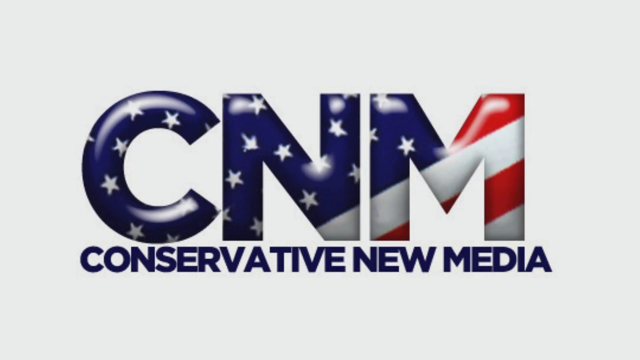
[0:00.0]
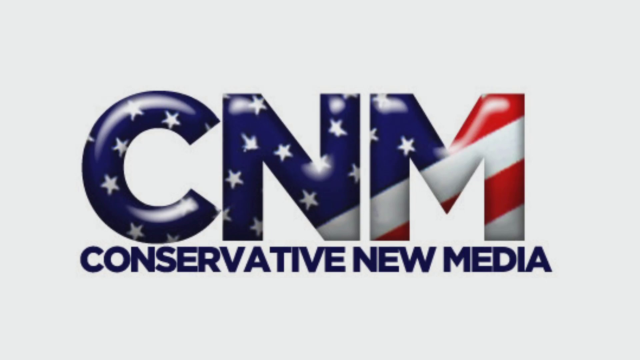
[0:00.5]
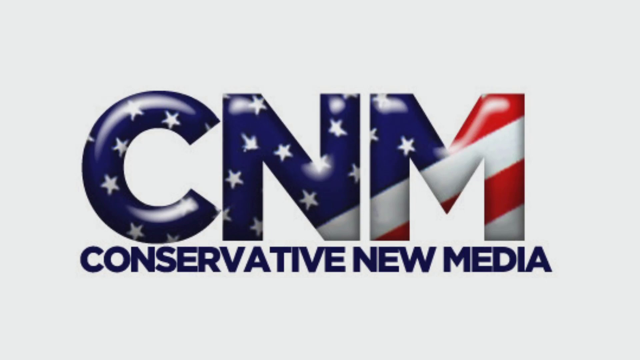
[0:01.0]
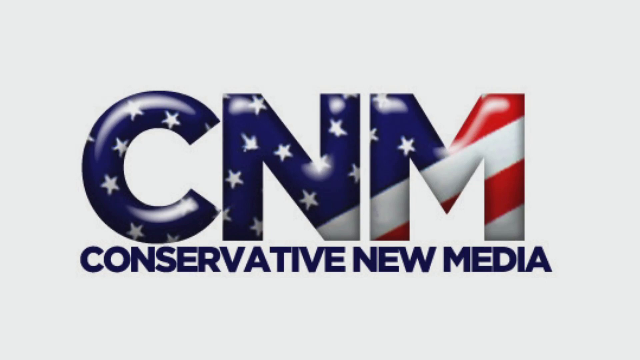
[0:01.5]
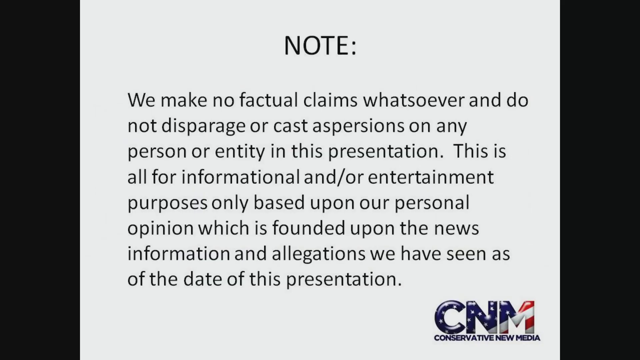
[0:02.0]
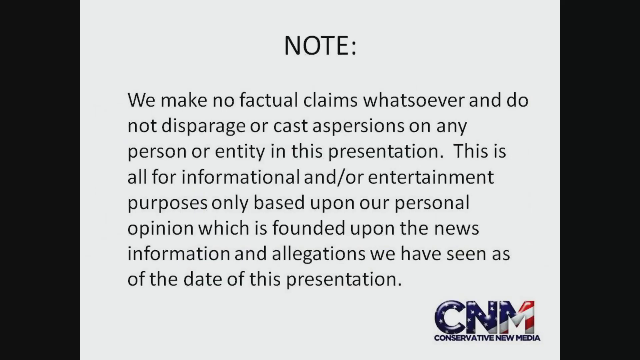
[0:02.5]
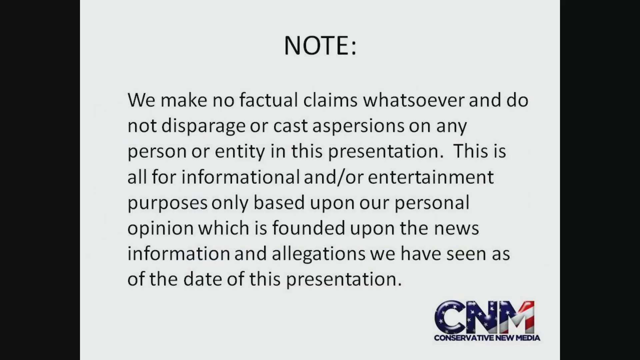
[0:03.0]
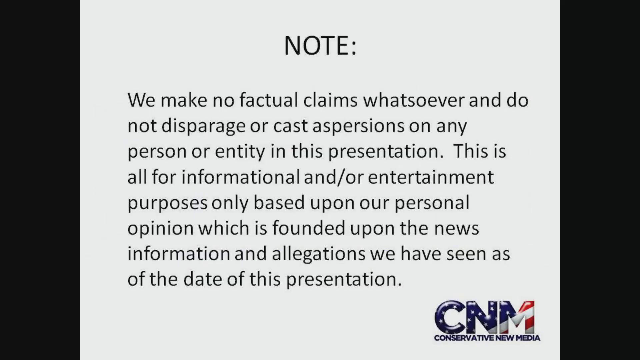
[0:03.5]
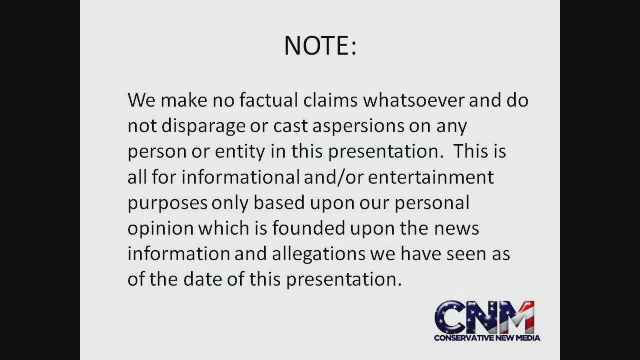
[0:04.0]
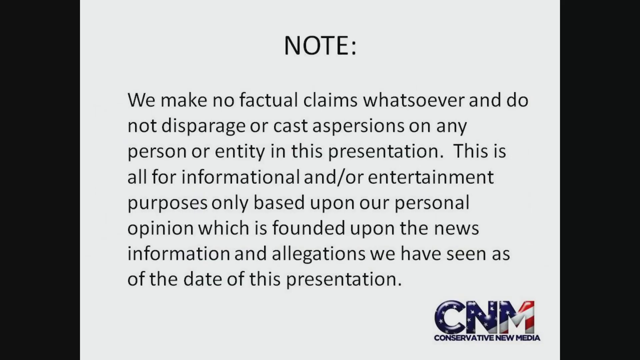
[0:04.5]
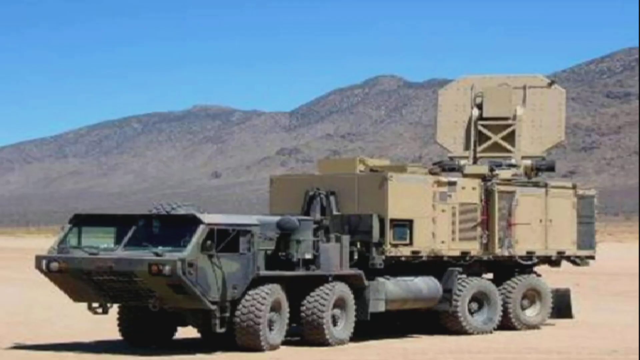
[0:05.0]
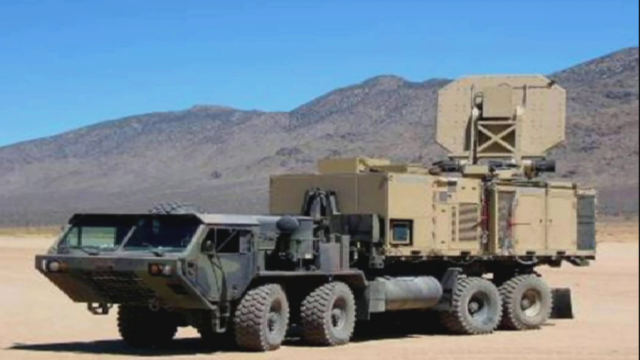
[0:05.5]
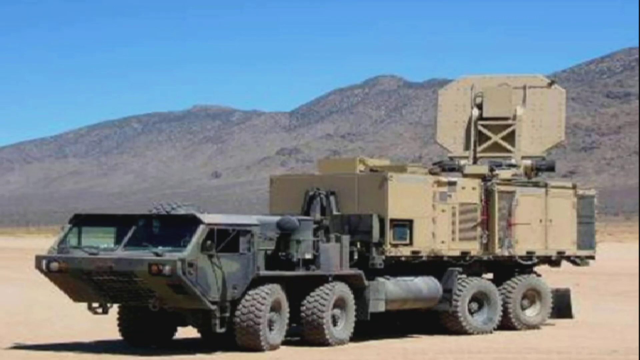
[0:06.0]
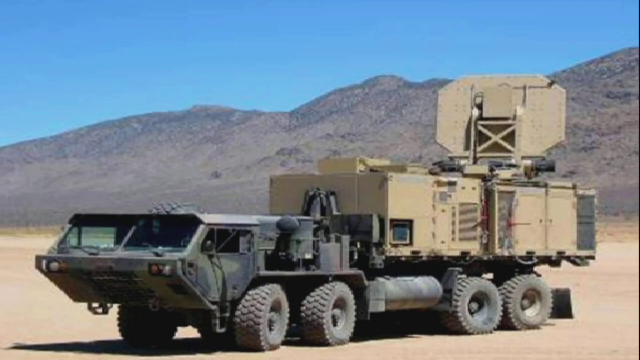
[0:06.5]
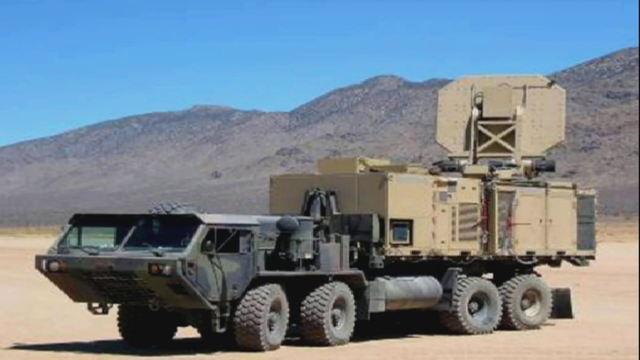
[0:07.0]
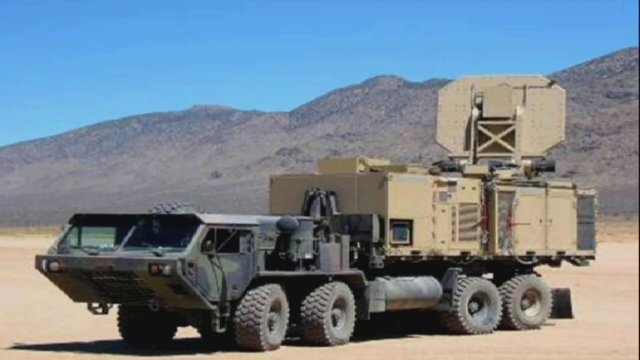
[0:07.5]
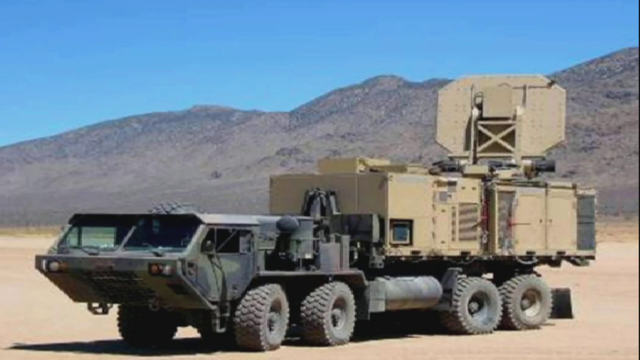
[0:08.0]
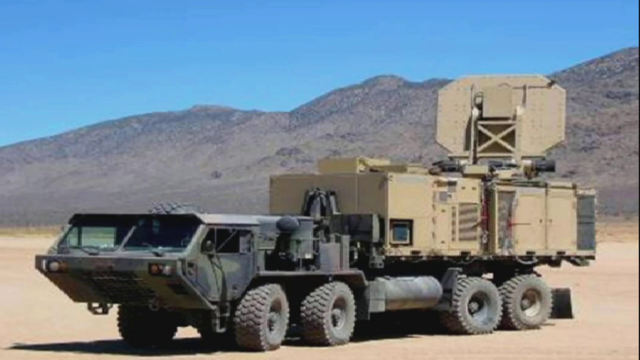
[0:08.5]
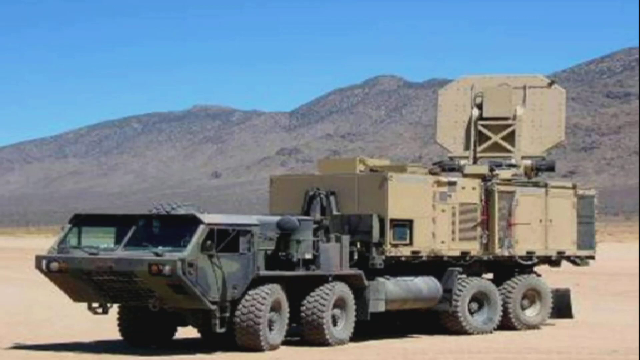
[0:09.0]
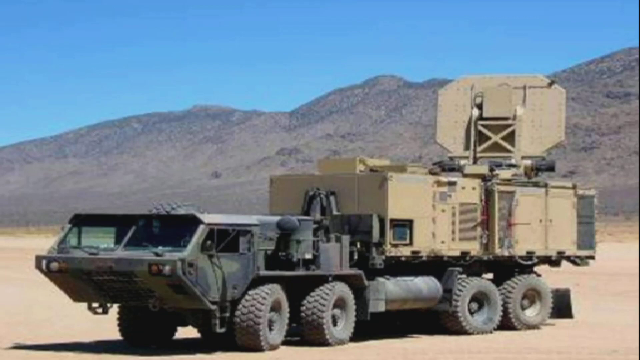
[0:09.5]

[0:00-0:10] The letters "CNM" appear, colored like a United States flag, and below them is written "conservative new media," the meaning of the letters. A note follows, reading: "we make no factual claims whatsoever and do not disparage or cast suspicions on any person or entity. In this presentation this is all for informational and or entertainment purposes only based upon our personal opinion which is founded upon the news information and allegations we have seen as of the date of this presentation."